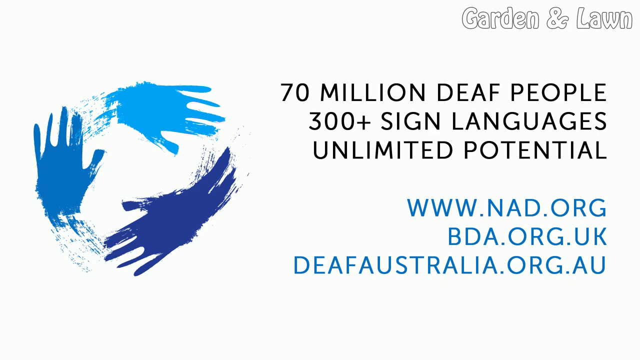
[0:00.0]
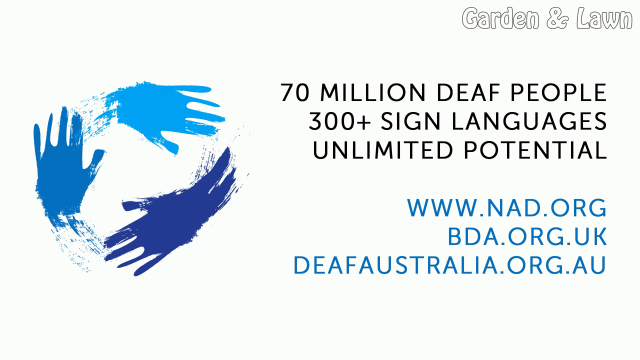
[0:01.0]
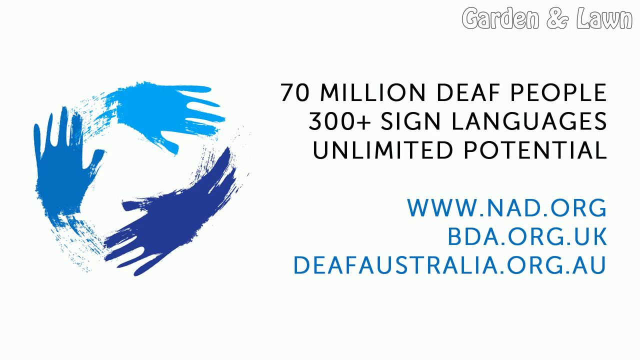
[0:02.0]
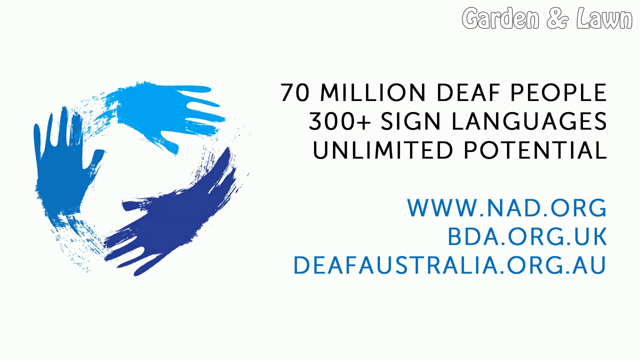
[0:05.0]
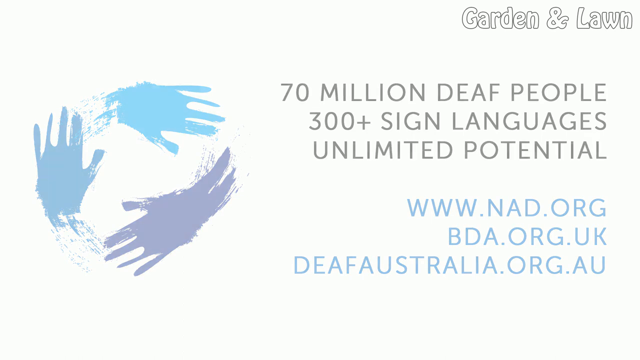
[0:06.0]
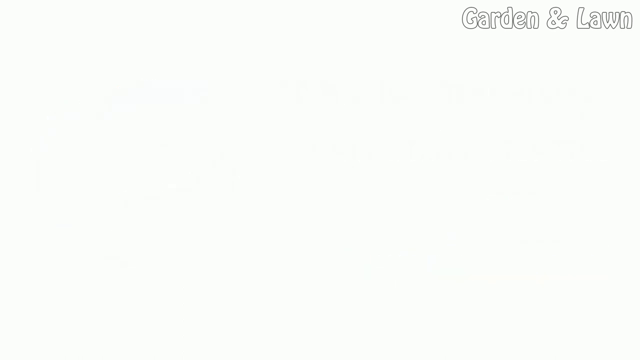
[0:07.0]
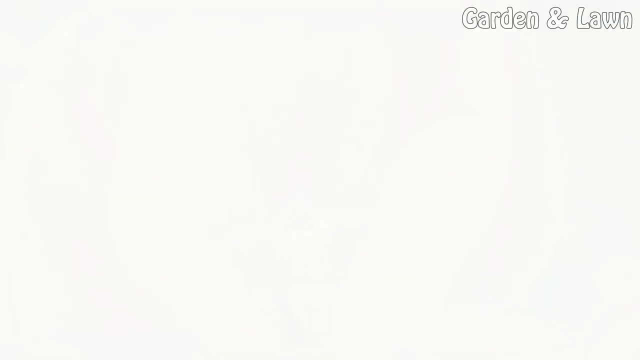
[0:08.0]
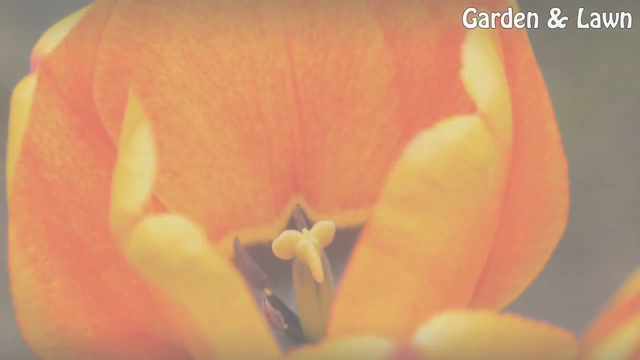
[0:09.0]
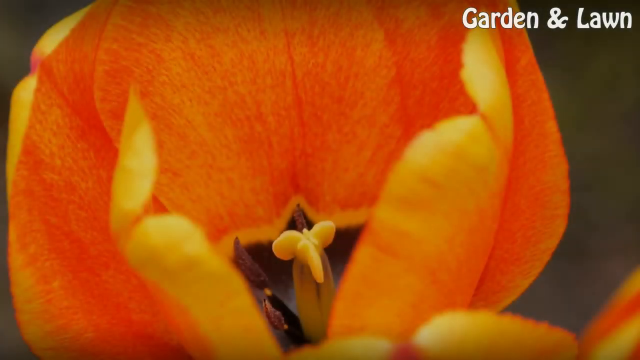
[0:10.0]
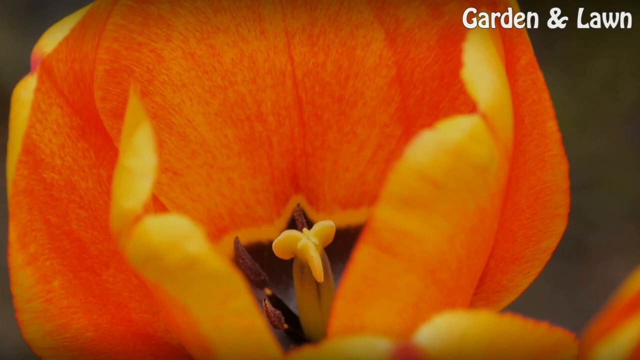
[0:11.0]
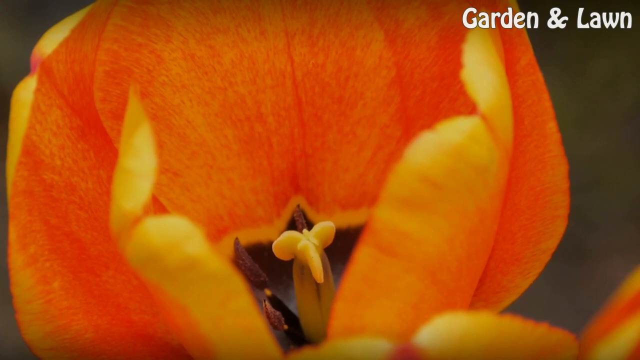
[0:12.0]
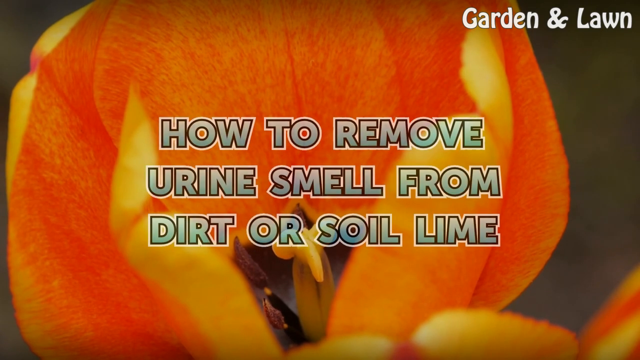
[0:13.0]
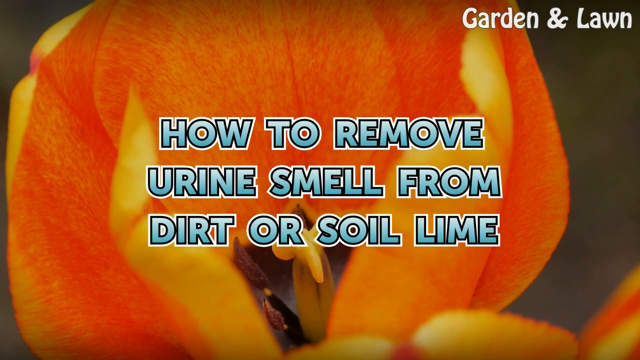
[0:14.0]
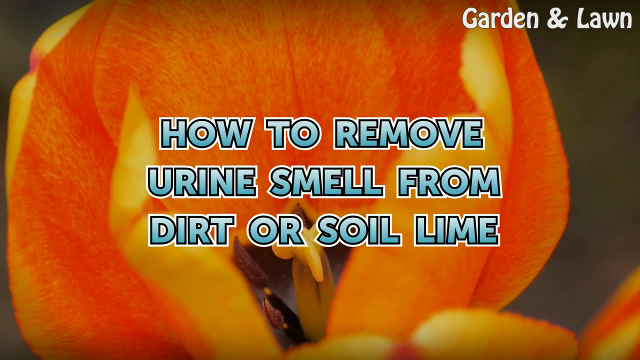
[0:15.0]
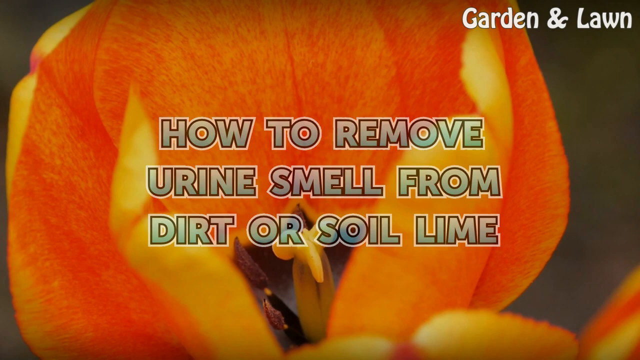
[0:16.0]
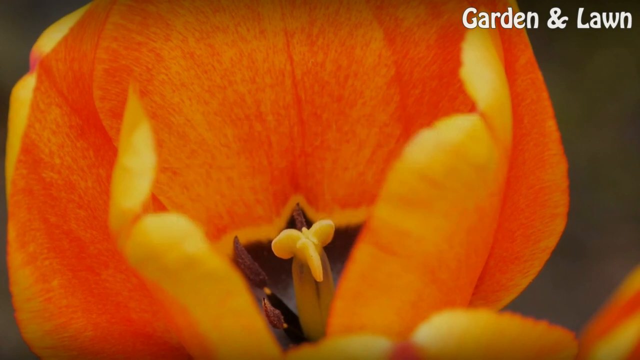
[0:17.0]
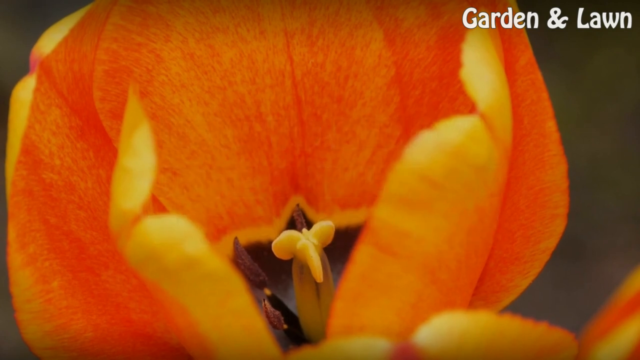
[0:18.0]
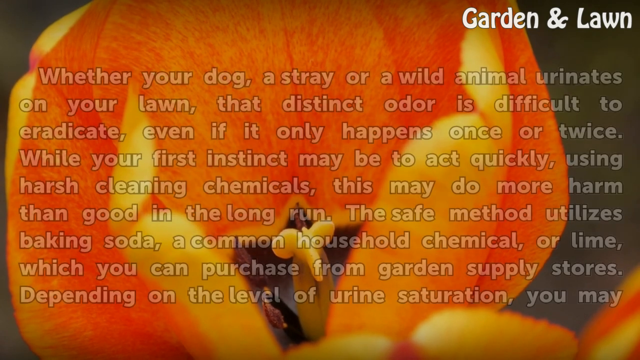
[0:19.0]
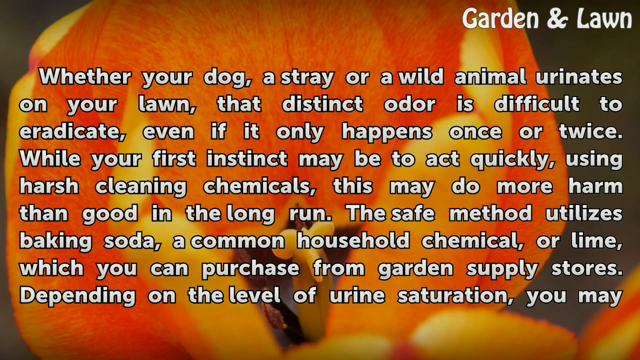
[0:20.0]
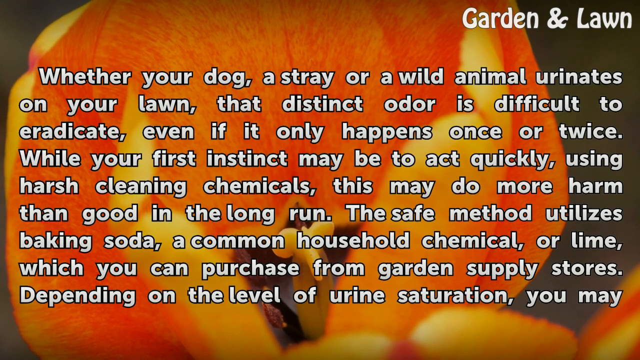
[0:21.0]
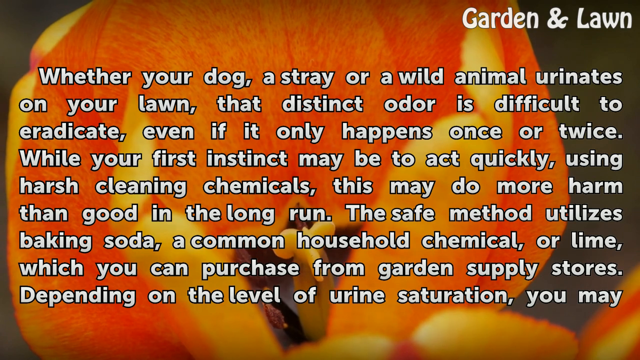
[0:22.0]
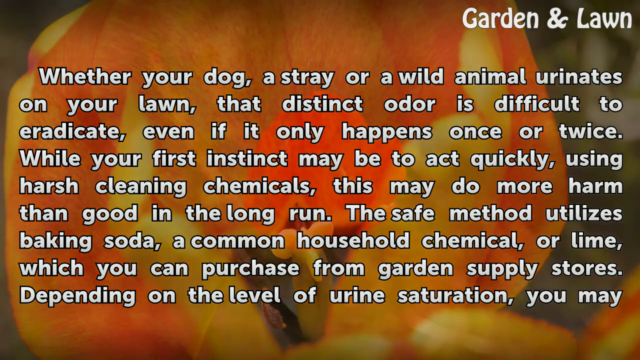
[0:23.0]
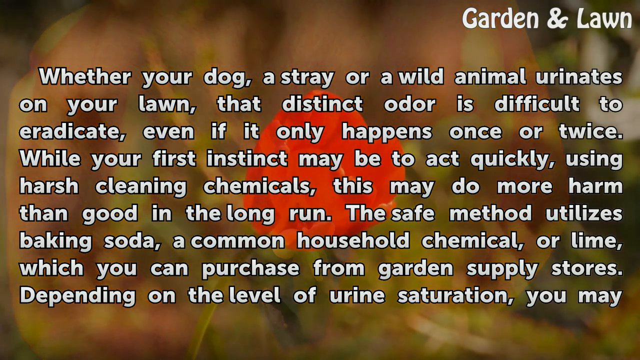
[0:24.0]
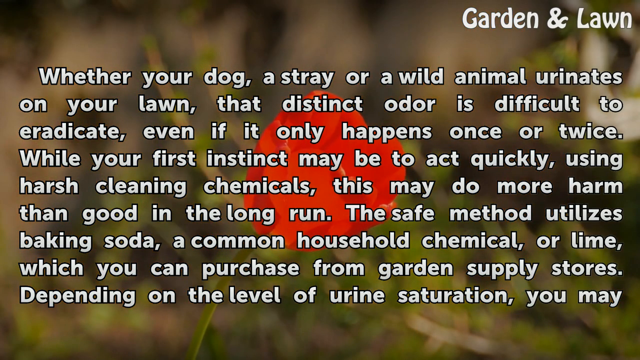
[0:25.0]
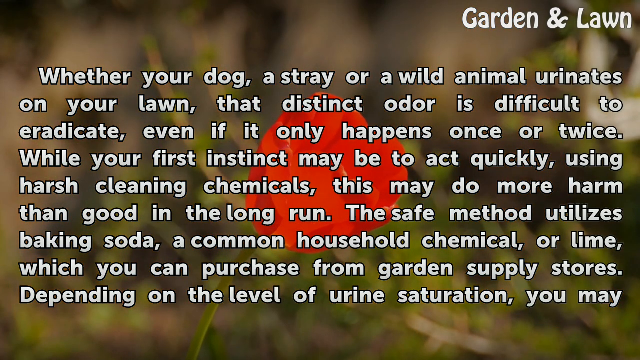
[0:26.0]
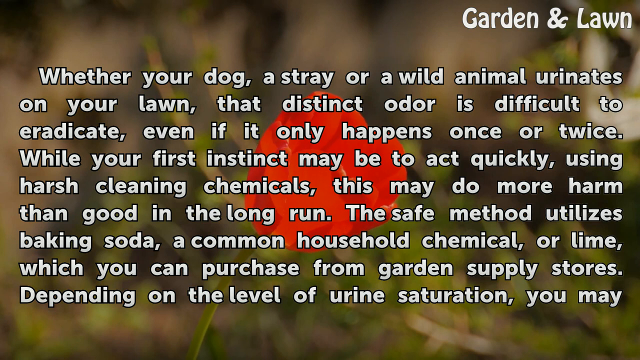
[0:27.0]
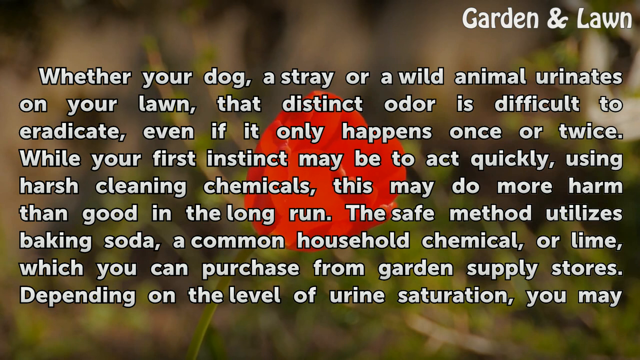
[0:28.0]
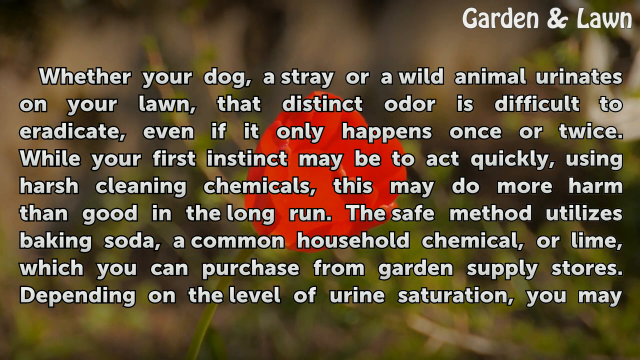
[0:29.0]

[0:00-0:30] Text at the top right gives the topic. Hands appear on a white screen. The view moves into a close-up of something orange that seems to be a flower of some kind. Its pistil is in the middle, with three small round things in the middle, and some seams are visible on the right side. The pistil faces out to the right, and its edge comes up and cuts in a little. The image darkens slightly, revealing more of the texture: little speckles of lighter and darker orange. Text in the middle reads "how to remove urine smell from dirt or soil lime." It goes away, and a big block of text appears, centered right underneath "garden lawn," starting on the left and slightly indented: "Whether your dog, a stray, or wild animal urinates on your lawn, that distinct odor is difficult to eradicate even if it only happens once or twice." The text continues about using baking soda or lime from any supply store. Next comes a pink flower, a little more zoomed out, swaying slightly back and forth. Some green plants, maybe leaves, are in the distance to the left, though they are blurred and hard to make out. The focus is on the pink flower in the center.